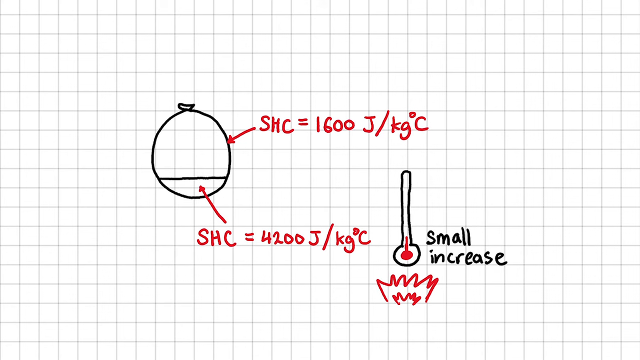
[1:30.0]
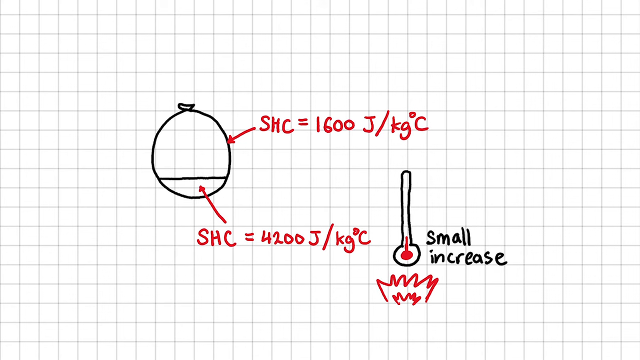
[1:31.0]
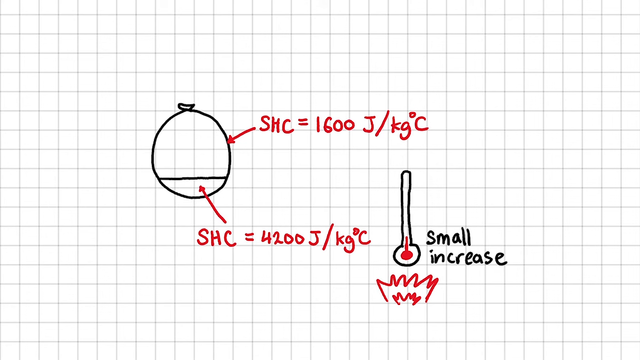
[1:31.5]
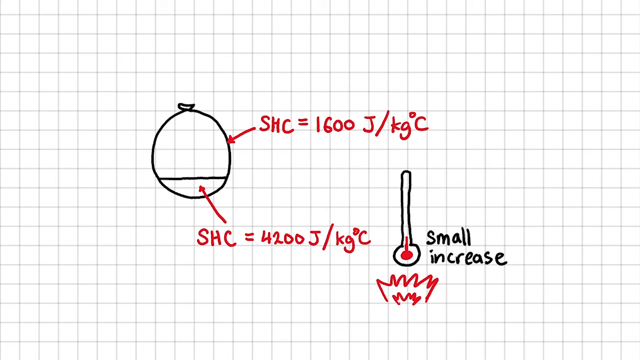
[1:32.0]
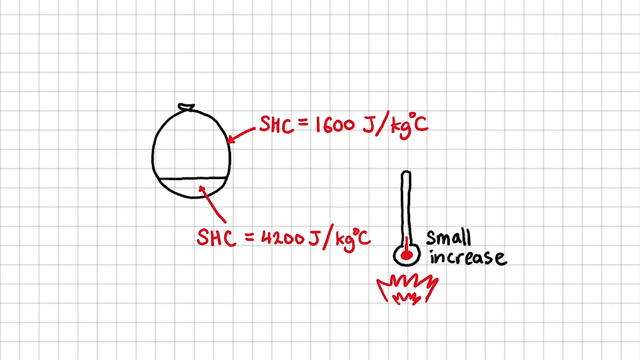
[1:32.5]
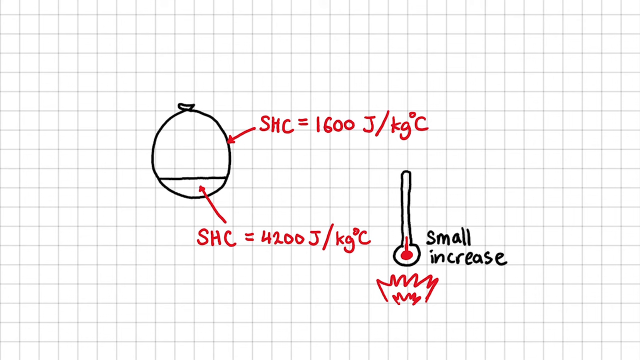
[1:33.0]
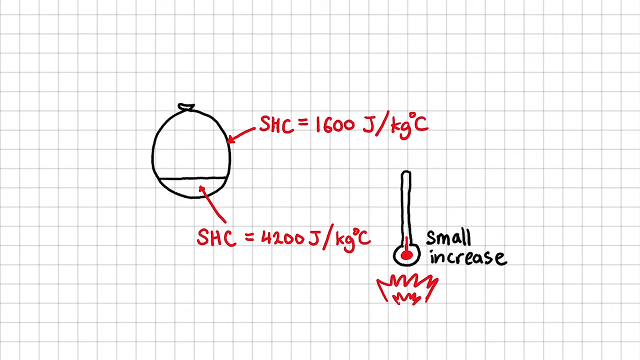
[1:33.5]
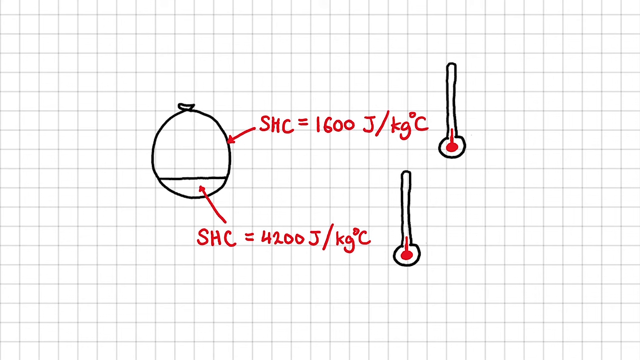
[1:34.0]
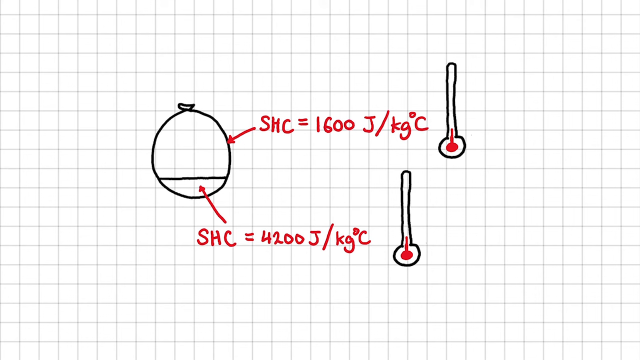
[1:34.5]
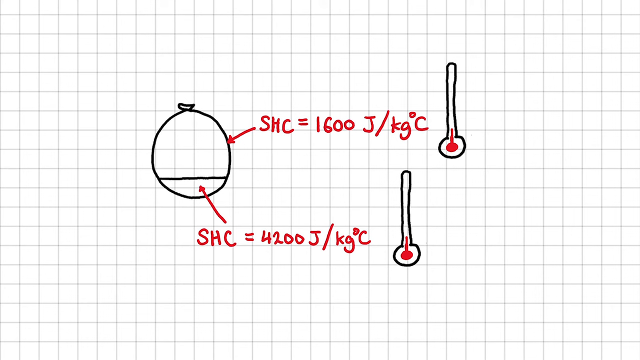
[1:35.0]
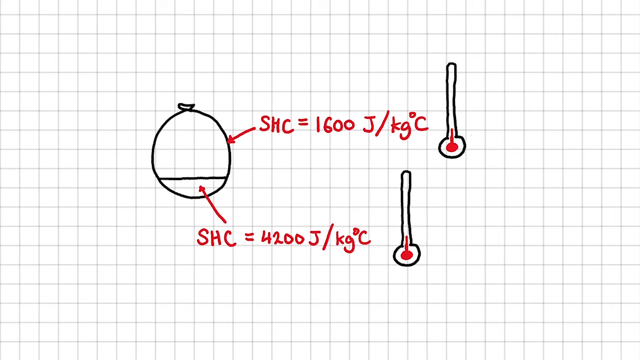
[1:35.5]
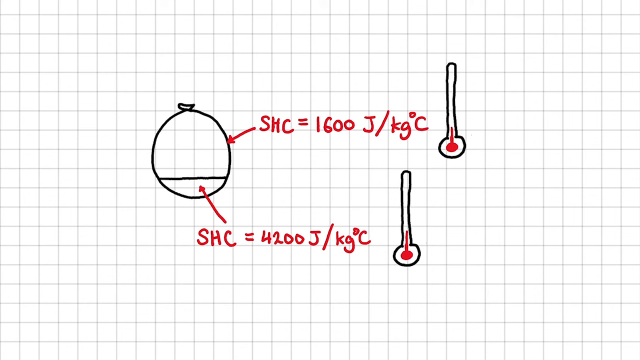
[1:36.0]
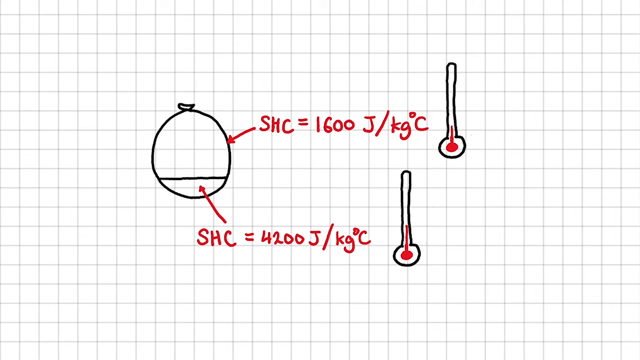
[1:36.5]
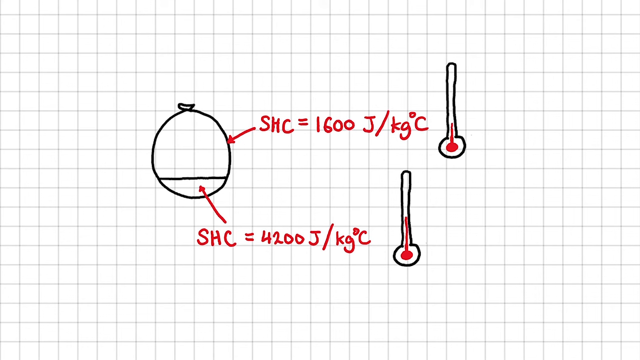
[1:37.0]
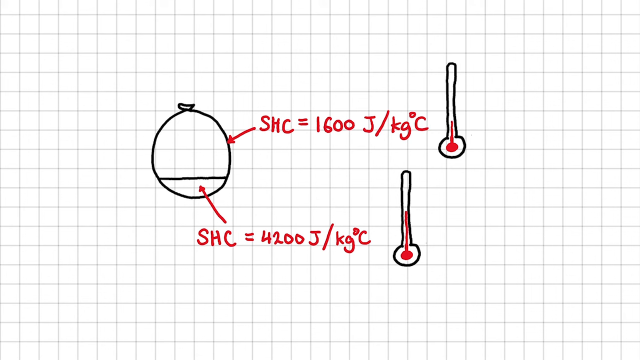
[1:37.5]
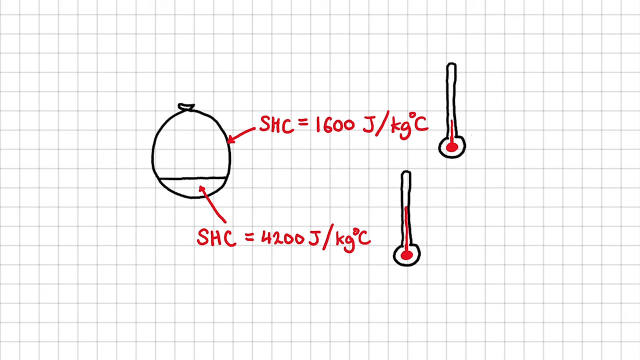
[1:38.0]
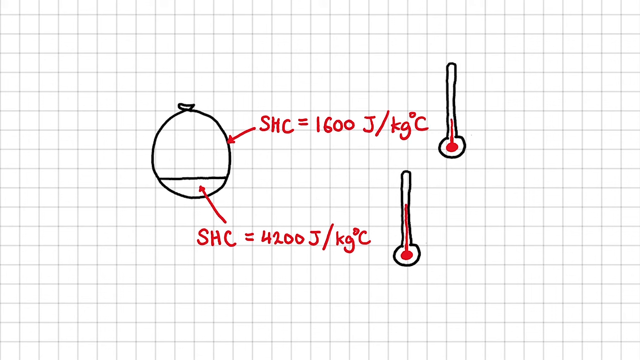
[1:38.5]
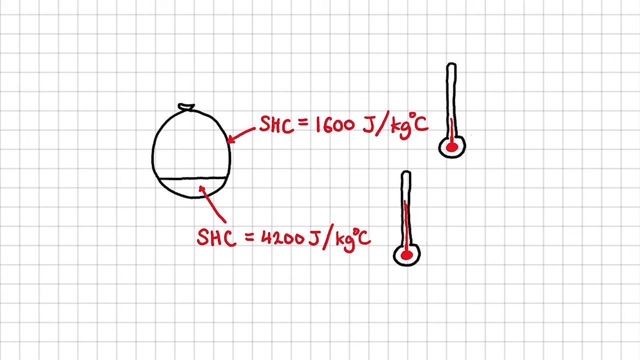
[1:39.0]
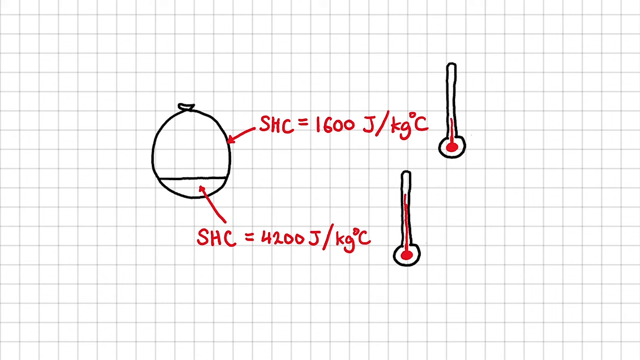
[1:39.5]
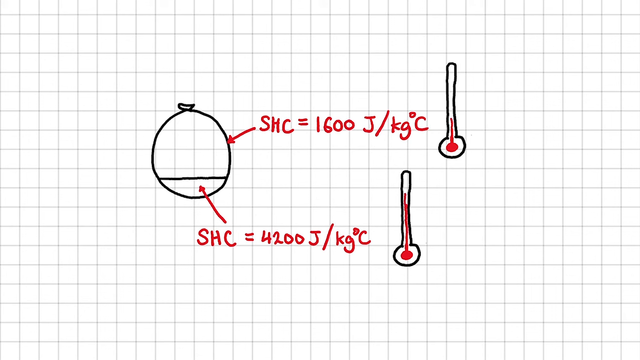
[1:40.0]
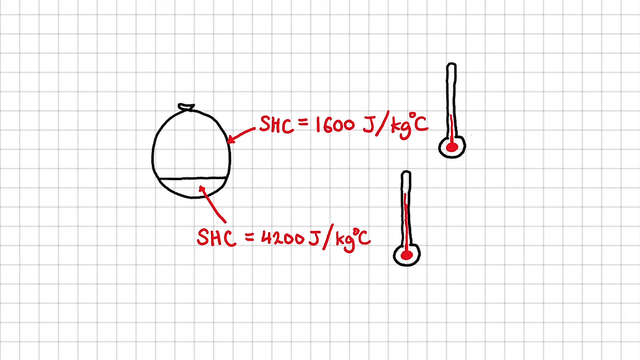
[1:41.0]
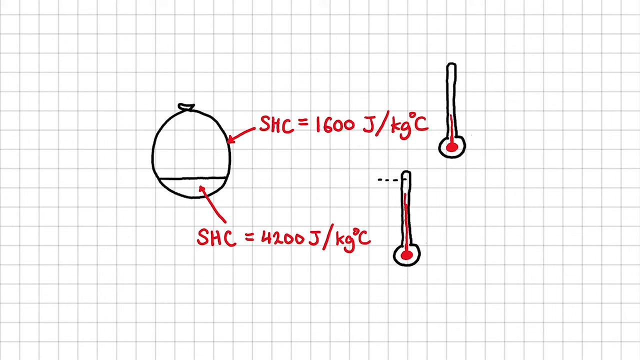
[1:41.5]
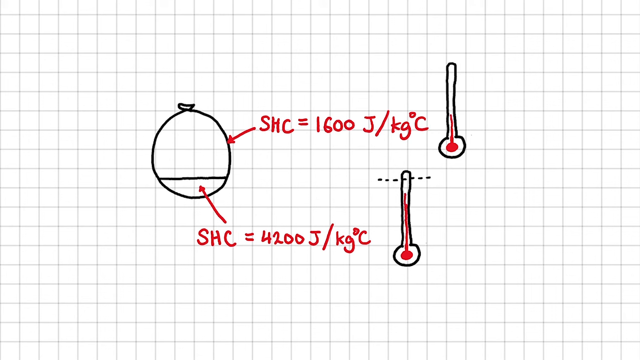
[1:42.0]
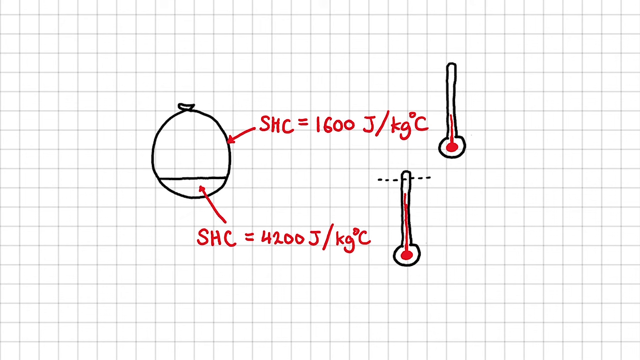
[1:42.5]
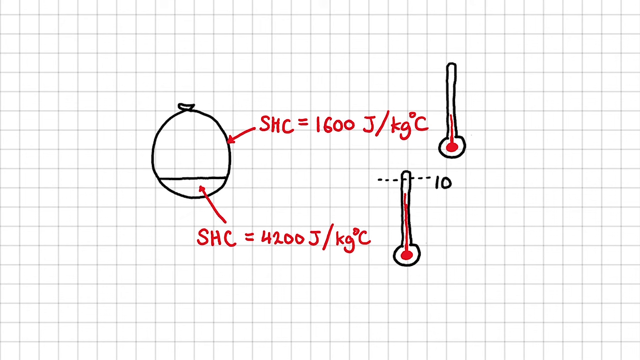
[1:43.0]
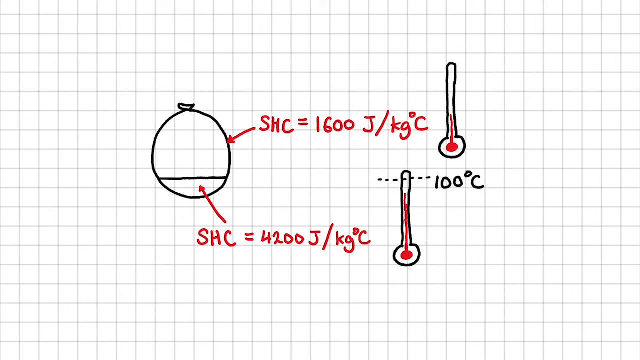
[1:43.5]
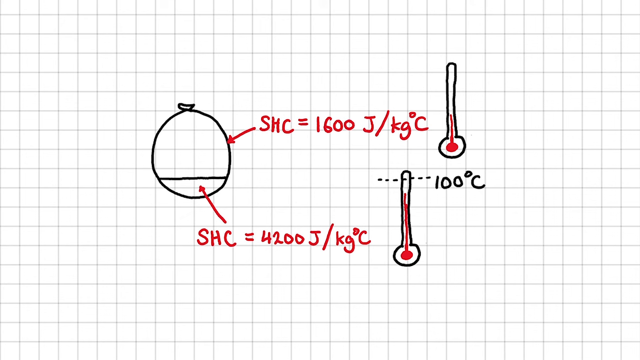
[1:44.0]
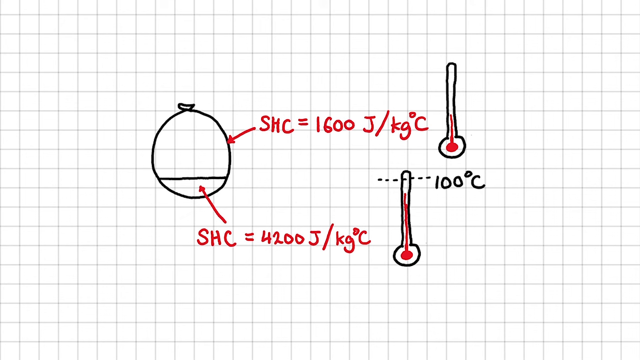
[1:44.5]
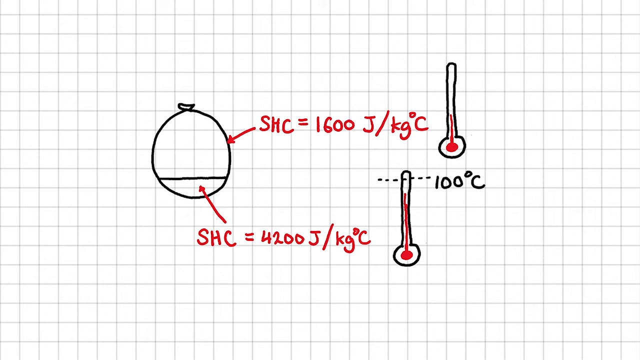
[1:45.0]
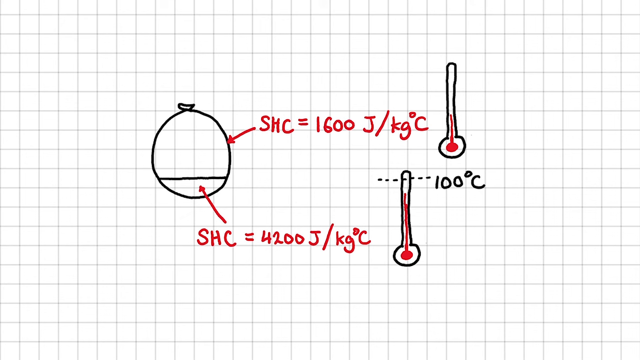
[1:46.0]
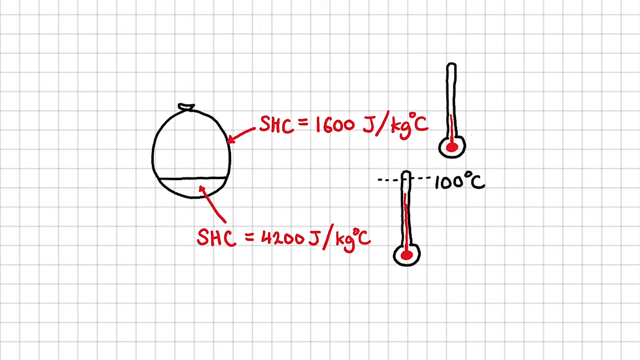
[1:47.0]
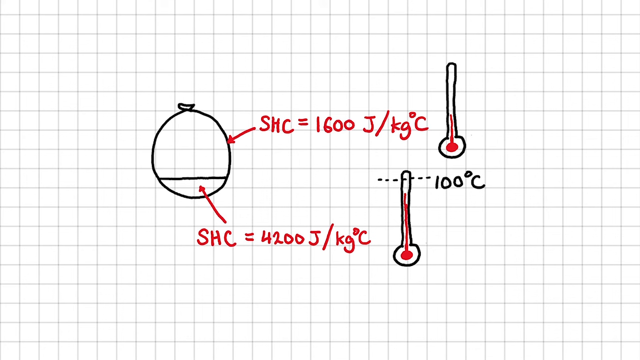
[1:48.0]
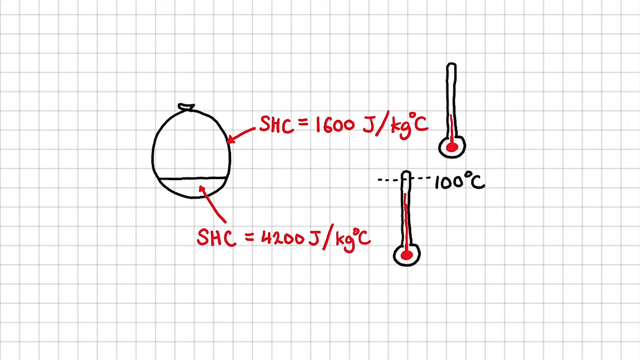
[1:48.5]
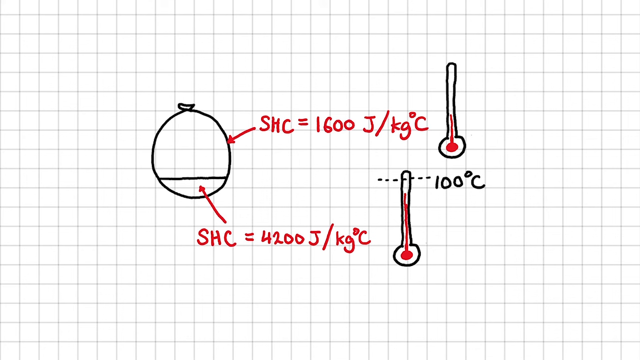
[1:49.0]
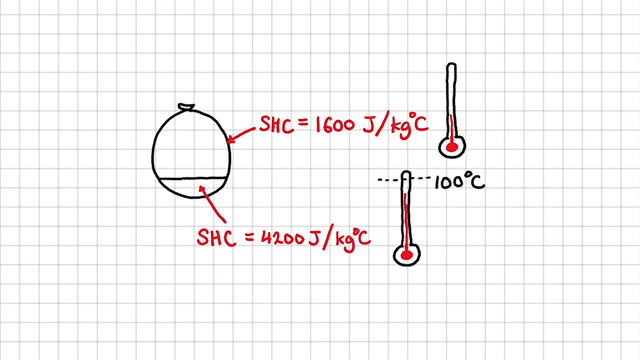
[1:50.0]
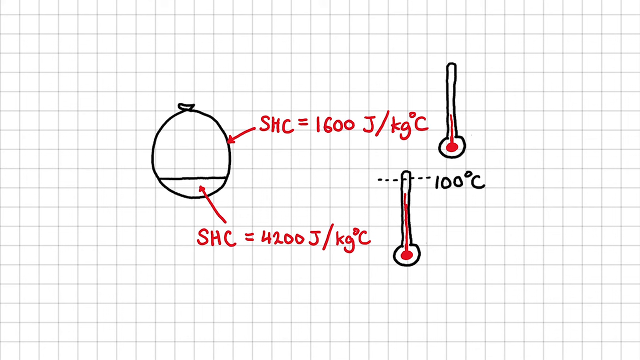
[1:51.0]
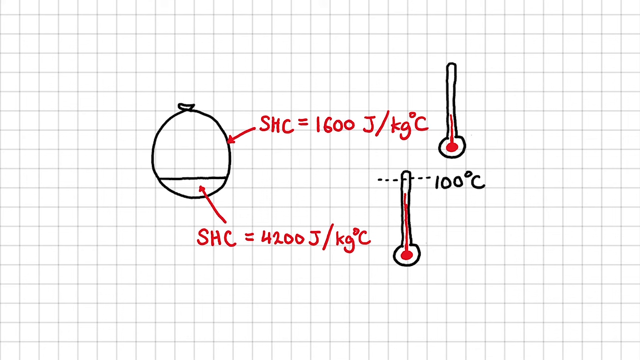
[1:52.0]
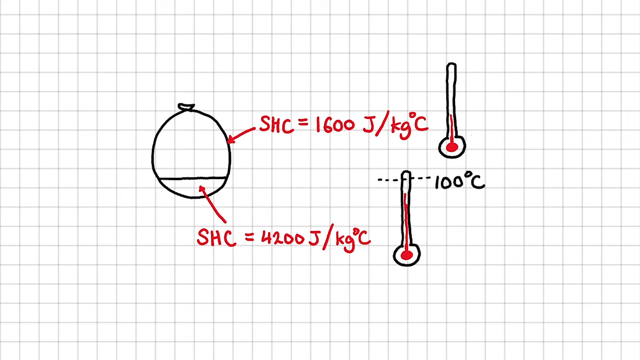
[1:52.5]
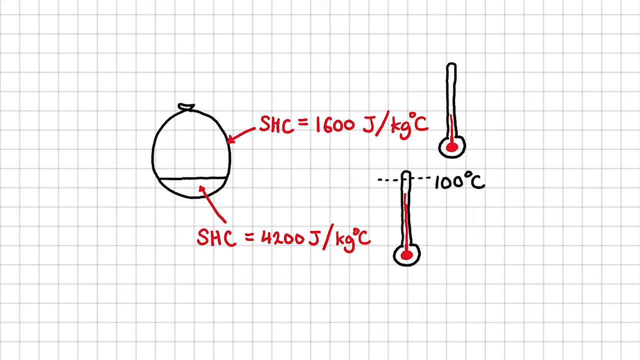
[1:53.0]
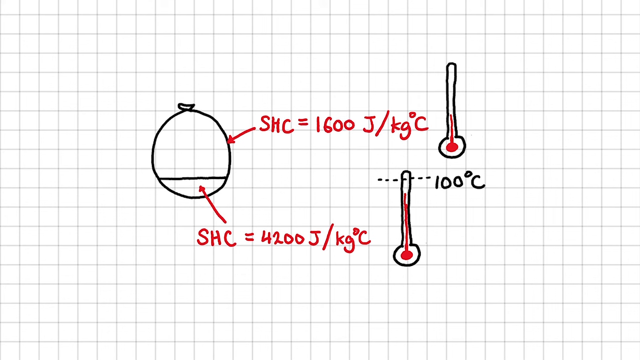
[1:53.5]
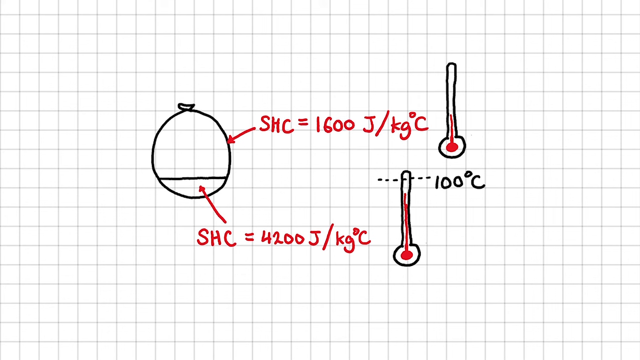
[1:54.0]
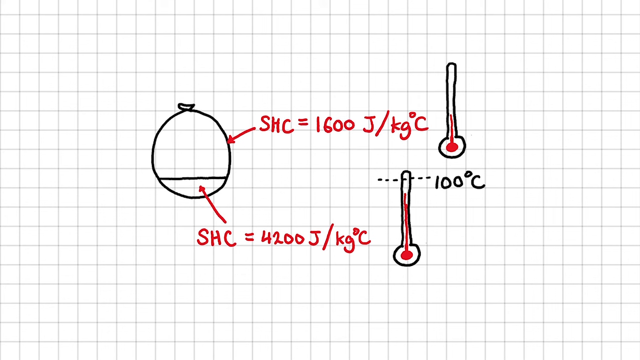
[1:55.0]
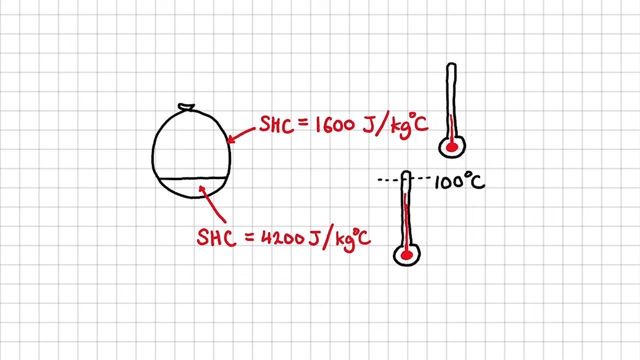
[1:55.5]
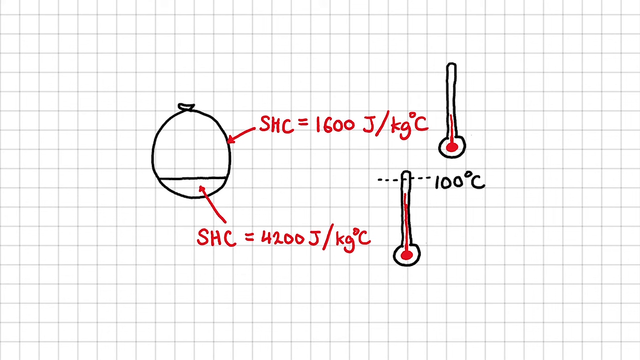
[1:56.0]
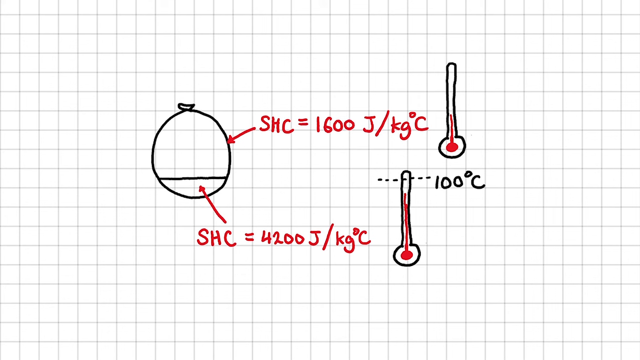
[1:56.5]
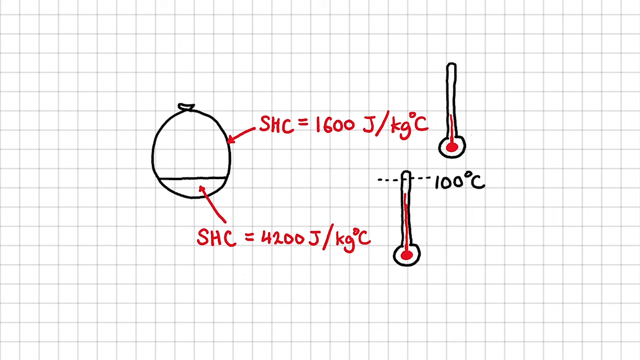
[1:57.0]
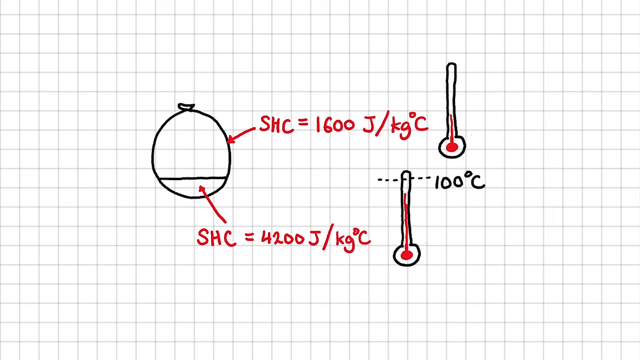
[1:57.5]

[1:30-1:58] The animation continues as the person draws a second thermometer to the right of the first annotation, which points to the empty space of the balloon. There are now two thermometers: one at the bottom by the balloon's water level and one at the top where the balloon has no water. The temperature where there is water increases slightly, while the temperature in the top section without water increases gradually. The person draws a horizontal line labeled 100 degrees Celsius. The drawing explains why the balloon with water did not pop, while the balloon without water popped easily.